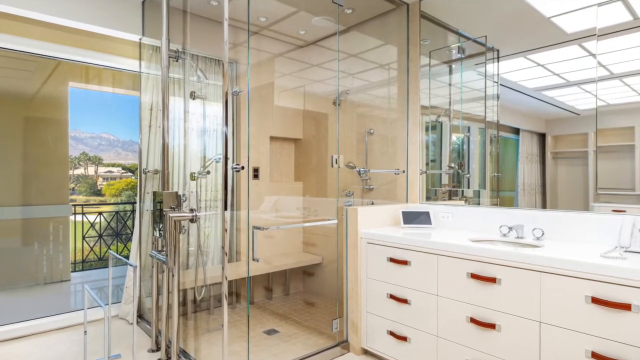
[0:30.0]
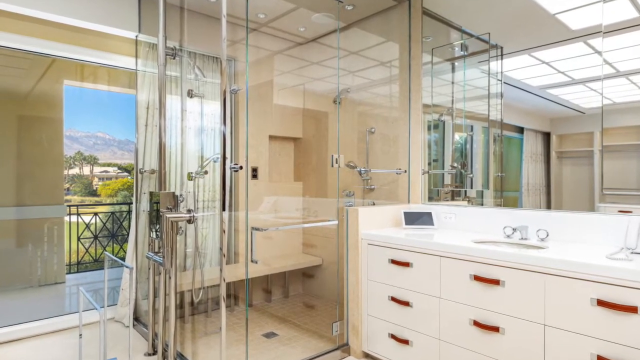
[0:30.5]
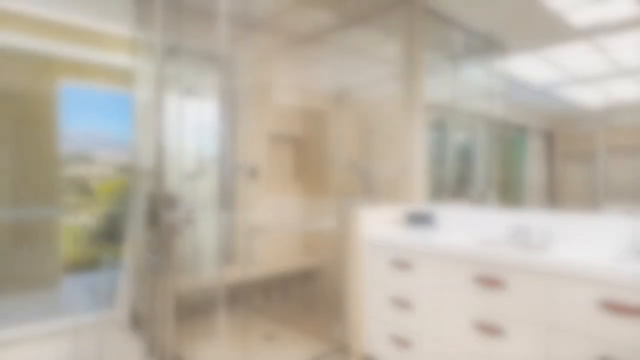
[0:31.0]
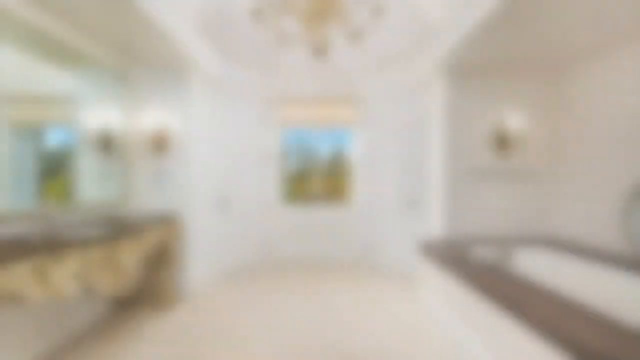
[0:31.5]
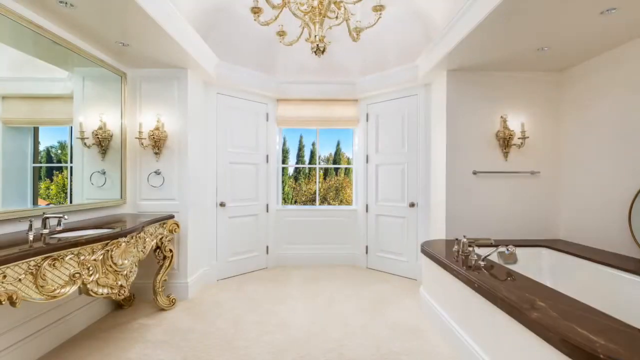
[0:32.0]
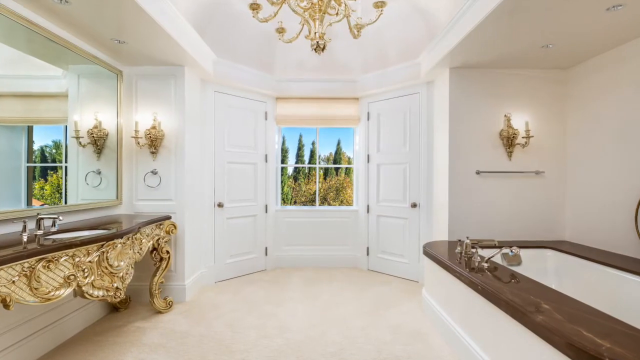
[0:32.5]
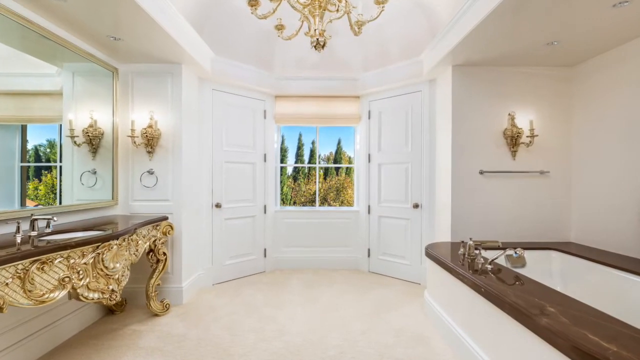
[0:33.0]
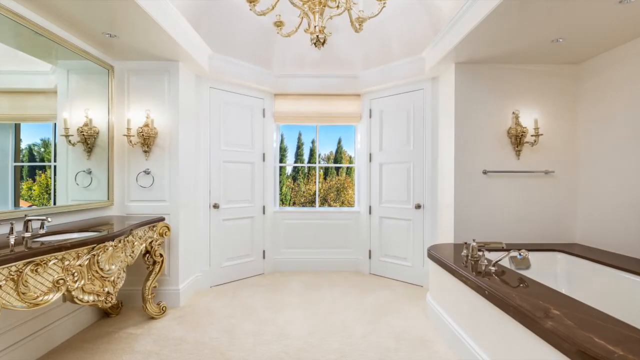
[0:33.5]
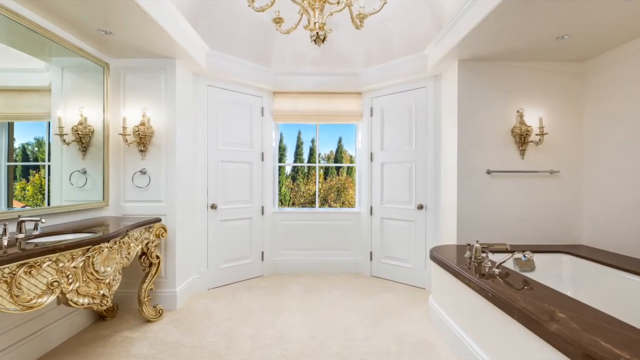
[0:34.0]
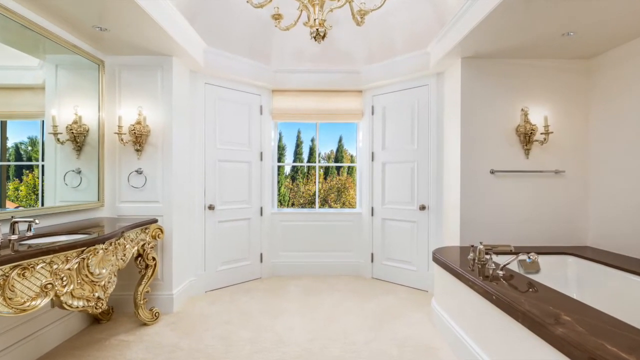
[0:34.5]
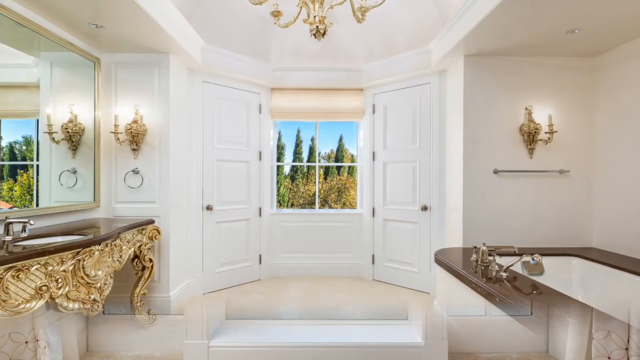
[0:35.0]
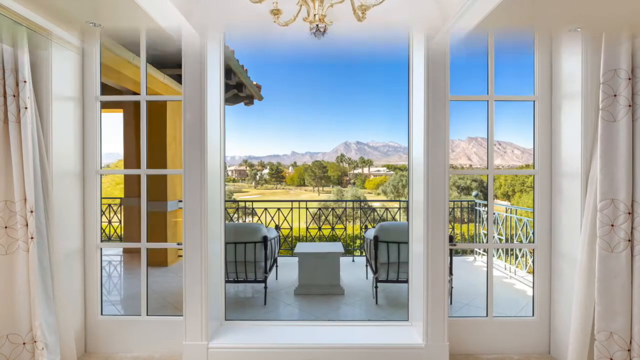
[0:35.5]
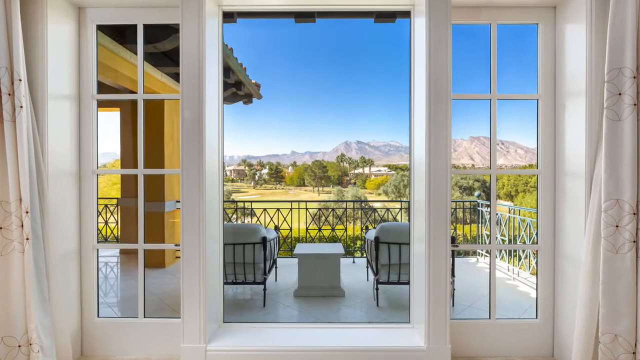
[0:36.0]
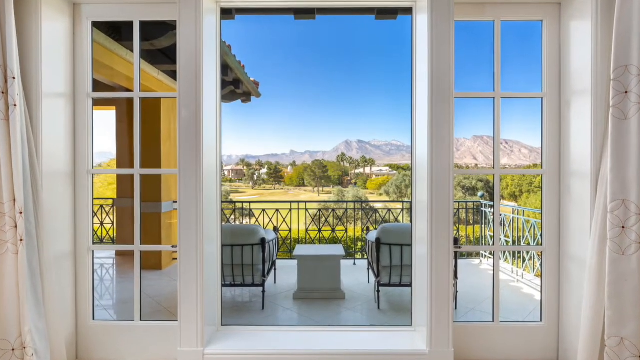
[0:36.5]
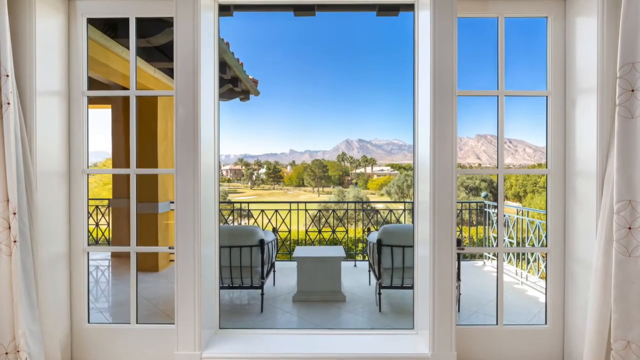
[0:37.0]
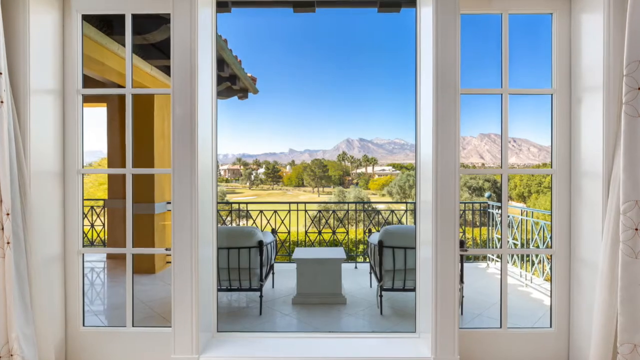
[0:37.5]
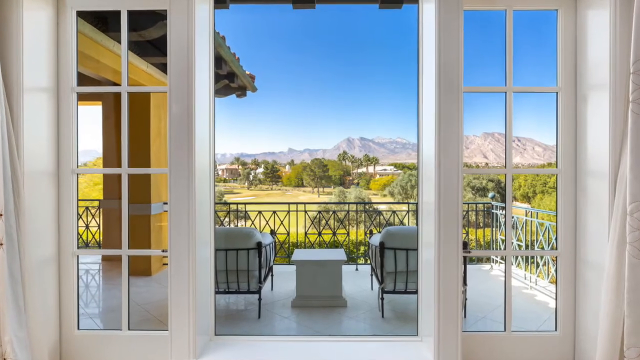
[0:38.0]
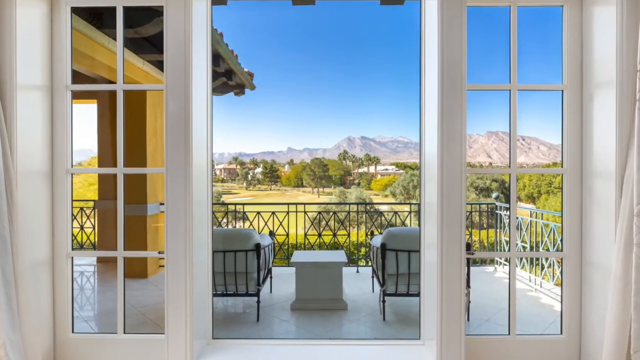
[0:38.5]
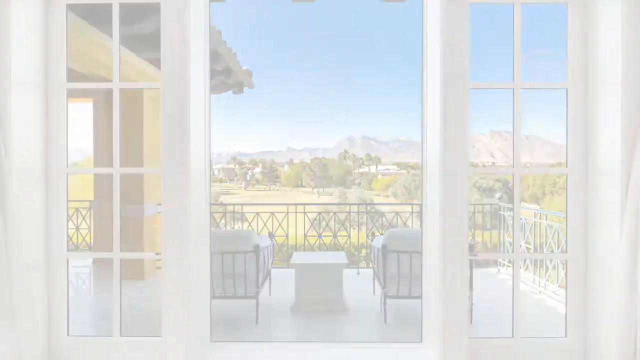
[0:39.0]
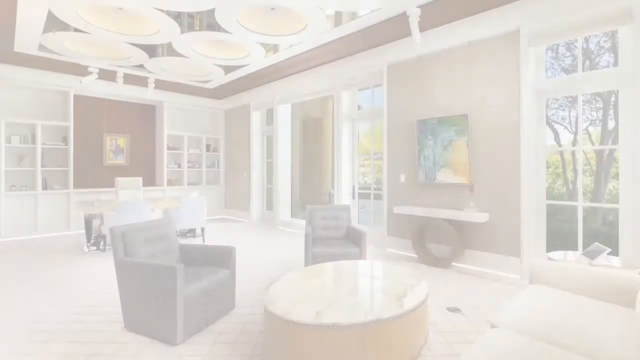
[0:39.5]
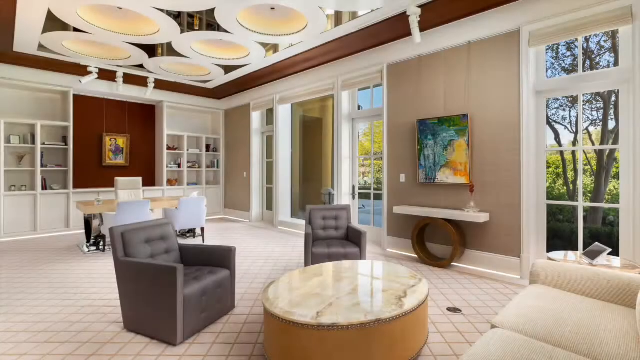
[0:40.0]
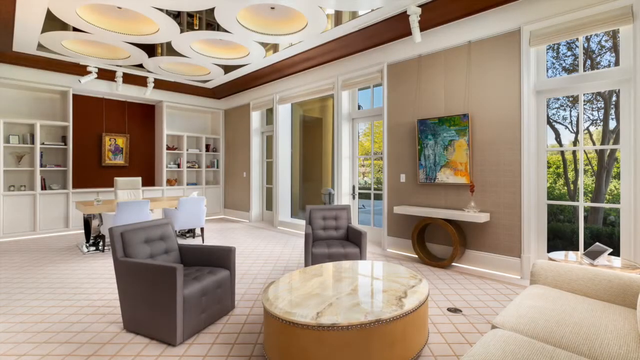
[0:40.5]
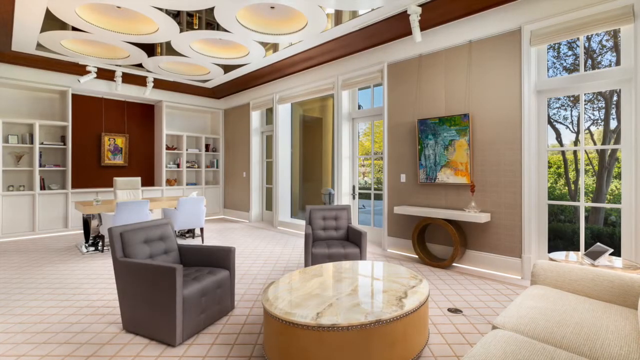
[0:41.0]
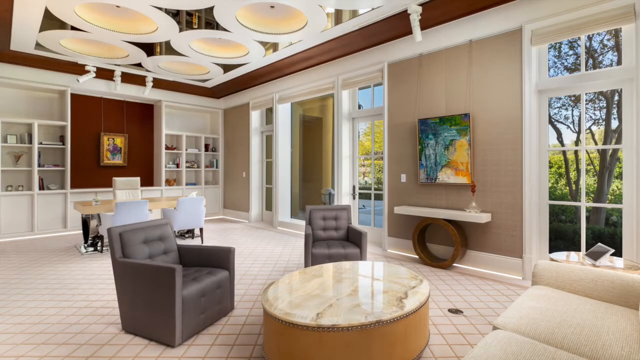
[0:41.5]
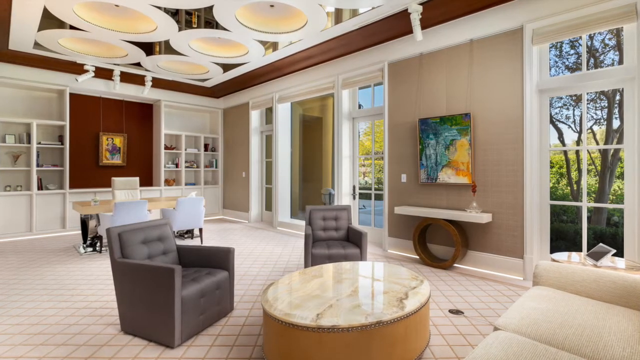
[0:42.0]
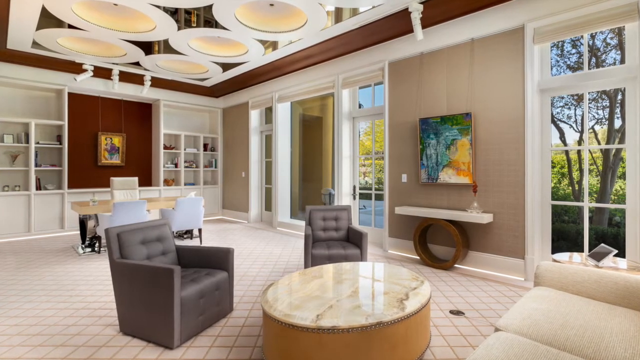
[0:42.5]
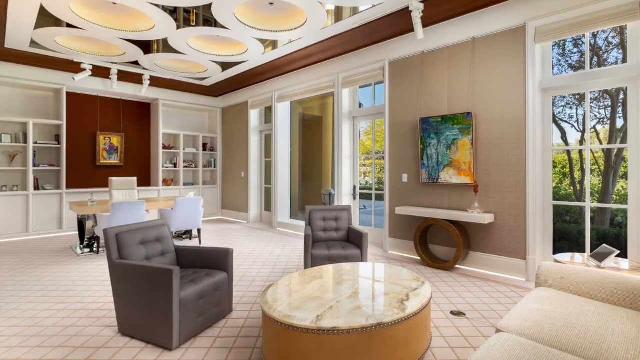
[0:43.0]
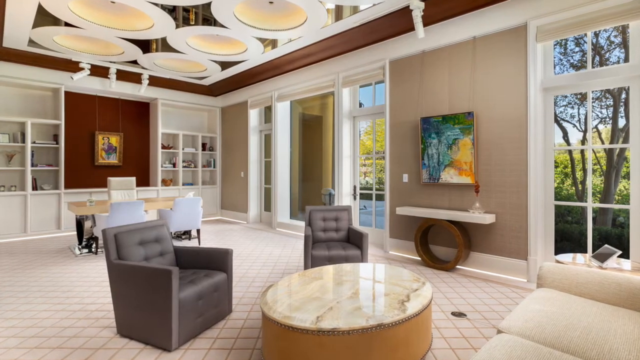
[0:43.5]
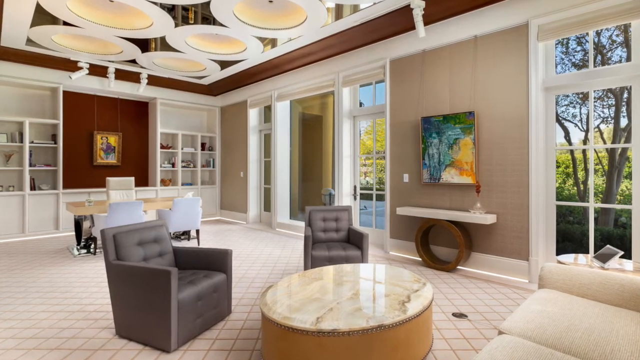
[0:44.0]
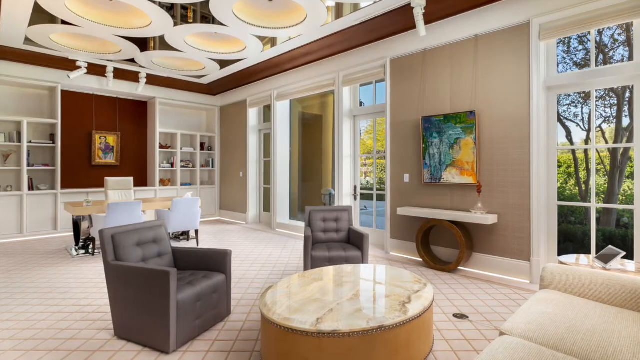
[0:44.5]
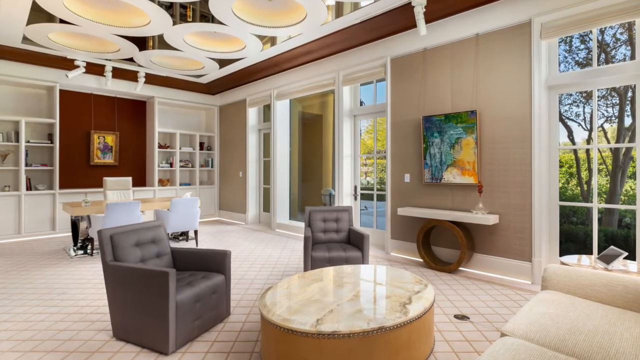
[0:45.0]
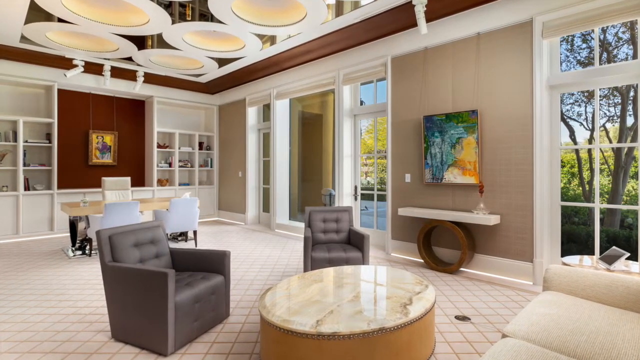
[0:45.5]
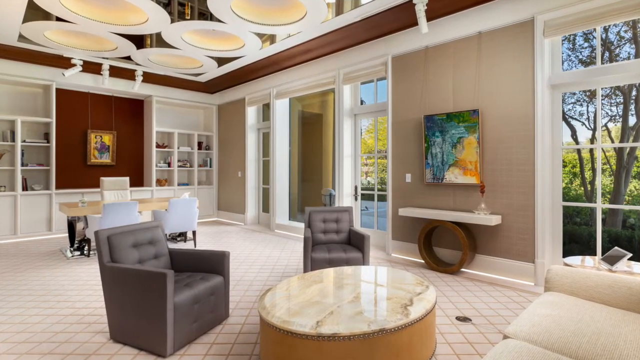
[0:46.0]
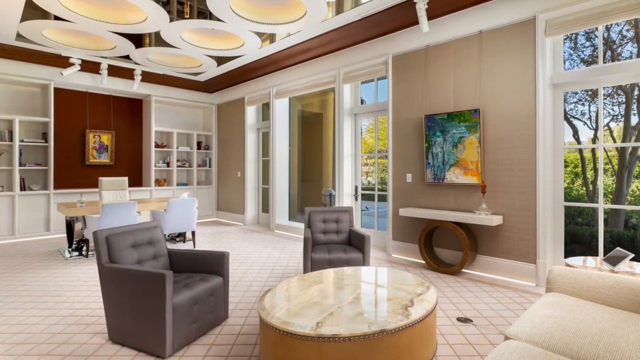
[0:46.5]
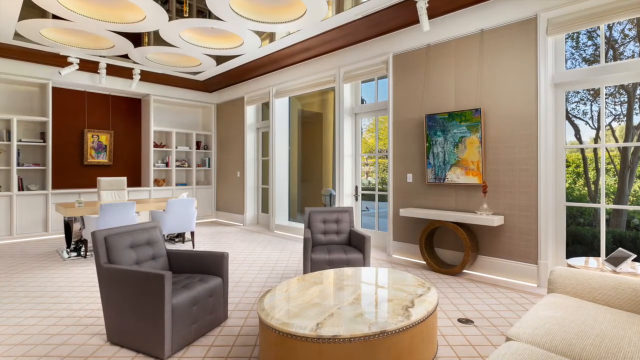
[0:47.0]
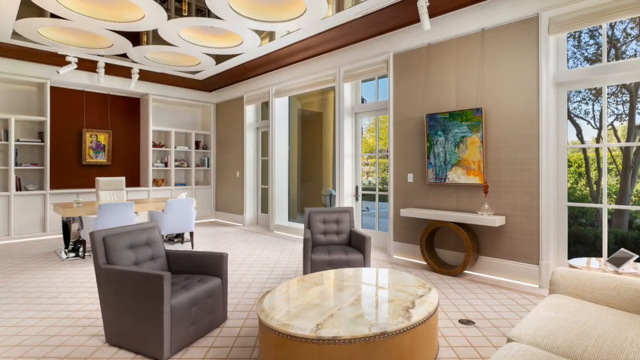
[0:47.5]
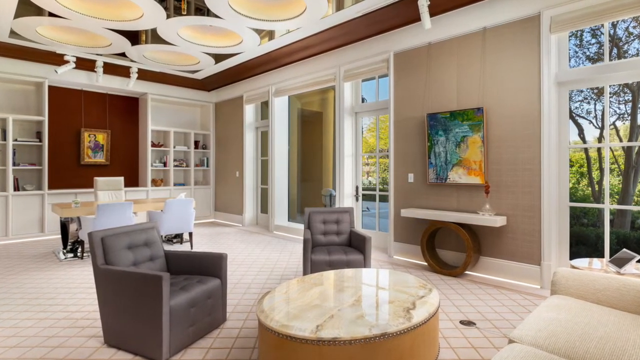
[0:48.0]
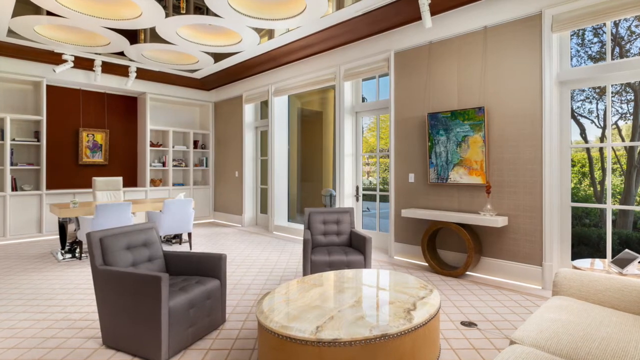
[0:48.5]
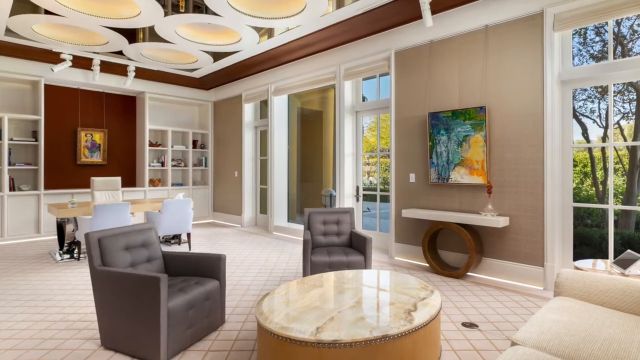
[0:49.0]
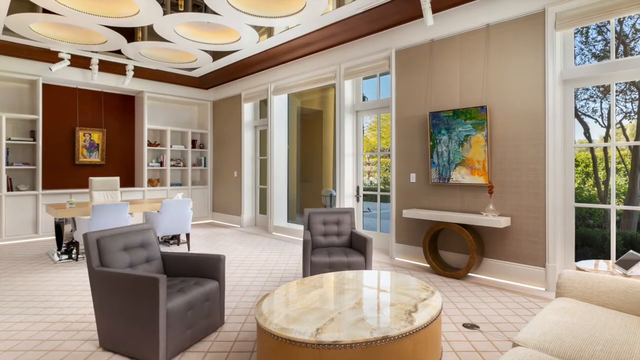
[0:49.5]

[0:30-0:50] The video transitions to a bath area with a tub. On the left of the screen is a sink area with a darker brown surface, bold gold-colored candelabras on each side, and a gold-framed full-wall mirror that reaches down to the surface of the sink area; the sink base has gold legs. To the right is a large white soaking tub with brown edging. The walls are beige, with a gold candelabra. Angular closet doors, set at 45-degree angles to the rest of the room, lead to a center four-pane window with a vertically raised blind, through which sky and manicured hedges are visible. A gold chandelier is in the ceiling. The scene then transitions to what appears to be a walkout area from a bedroom, with curtains on the sides and multi-pane windows accenting an open doorway to a seating area overlooking a large open space that almost has the appearance of a golf course, with other homes in the far distance. A quick transition follows to a room that appears to be an office. Its ceiling has large circular disks that act as lighting fixtures and are incorporated into the ceiling structure, with the feeling of a Frank Lloyd Wright-style design. A large desk with a high-back swivel chair is on the far wall, with bookcases on each side and a picture against a dark area in the center of the bookcase arrangement. There are doorways on the side walls, multi-pane windows, more artwork on beige walls, and gray square decorative armchairs around a marble circular table in the middle of the room. The floor tile is angled.